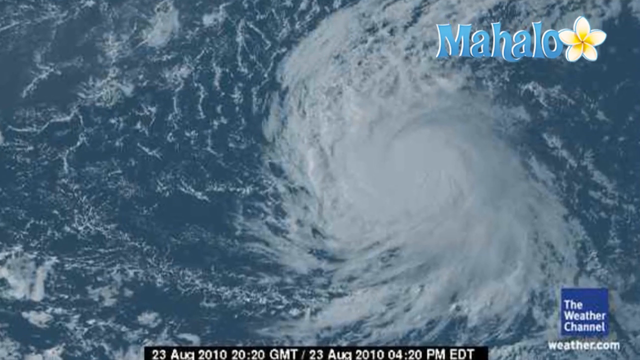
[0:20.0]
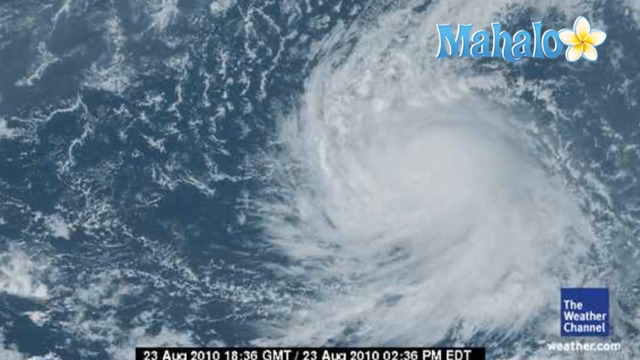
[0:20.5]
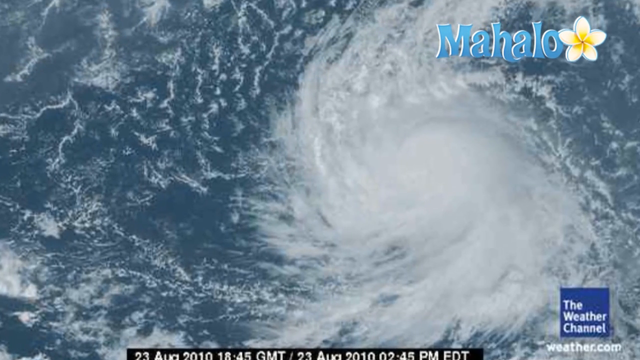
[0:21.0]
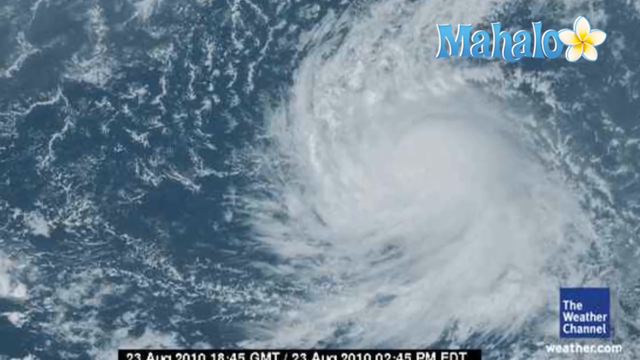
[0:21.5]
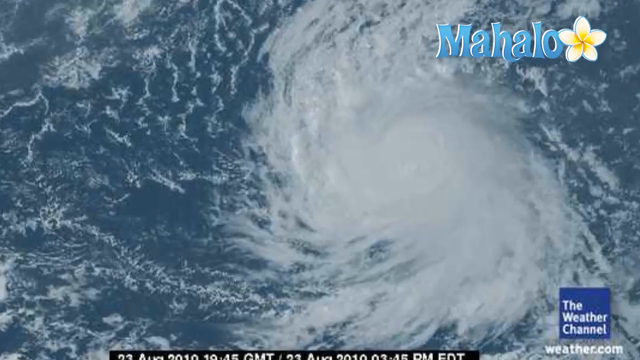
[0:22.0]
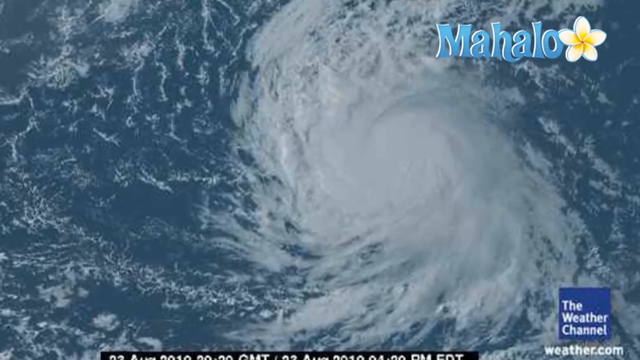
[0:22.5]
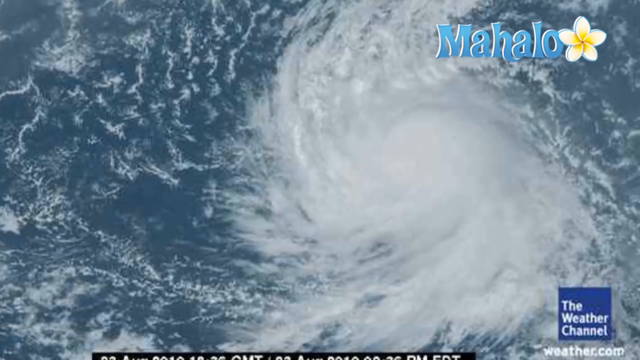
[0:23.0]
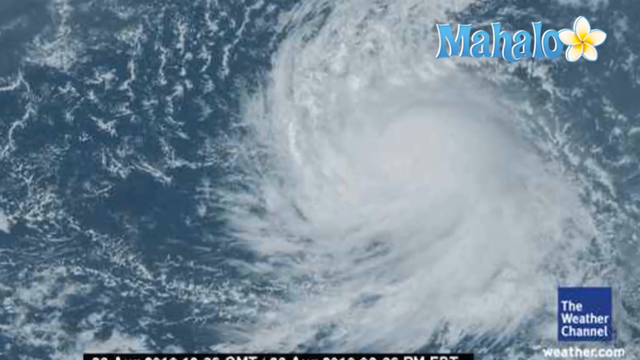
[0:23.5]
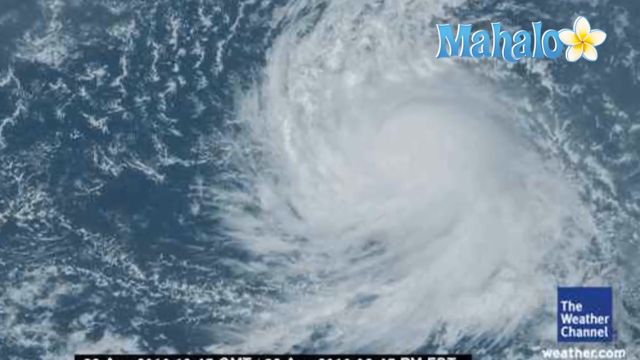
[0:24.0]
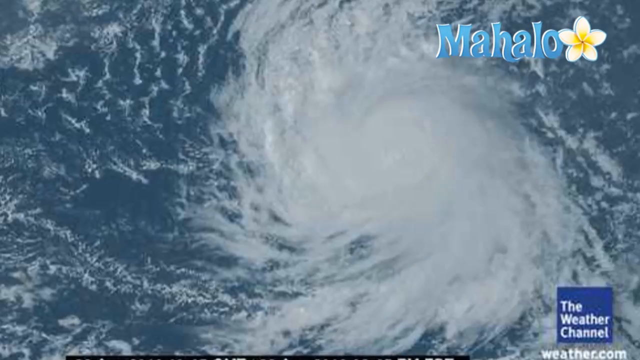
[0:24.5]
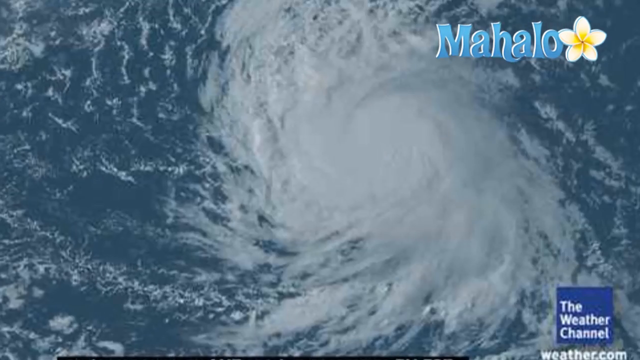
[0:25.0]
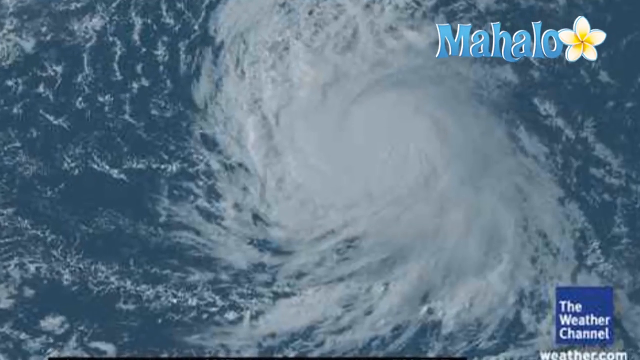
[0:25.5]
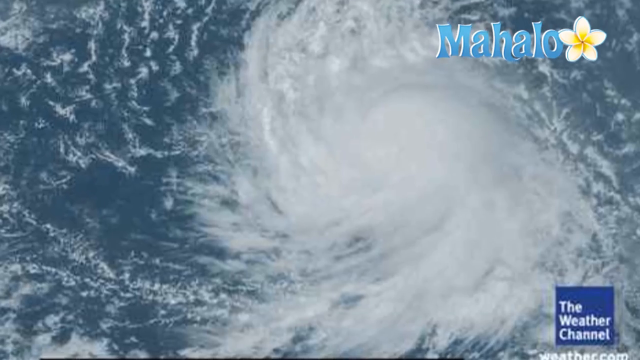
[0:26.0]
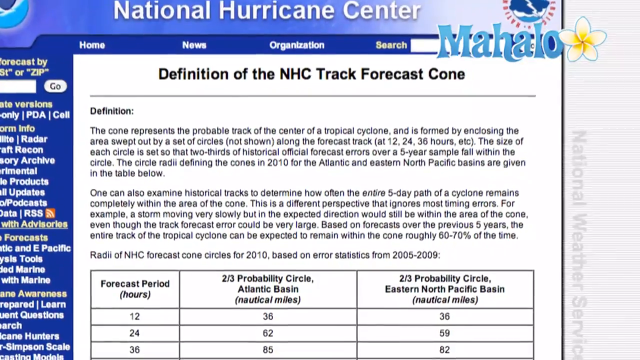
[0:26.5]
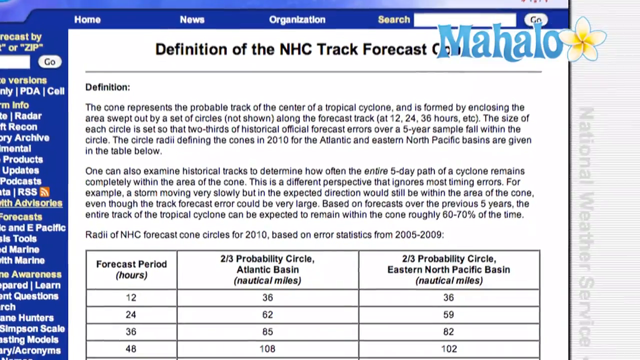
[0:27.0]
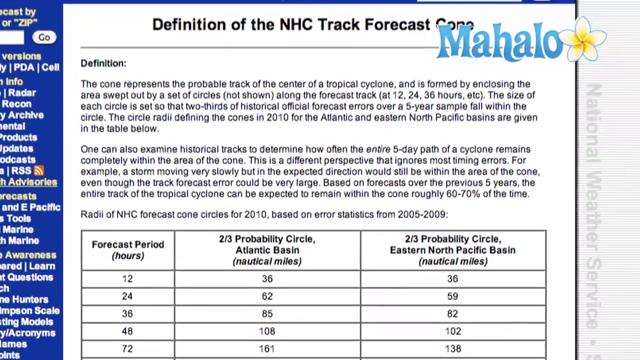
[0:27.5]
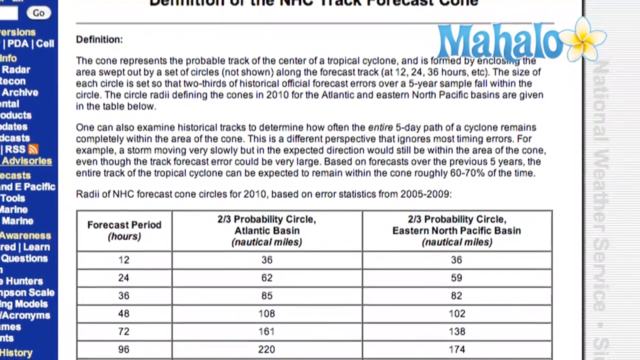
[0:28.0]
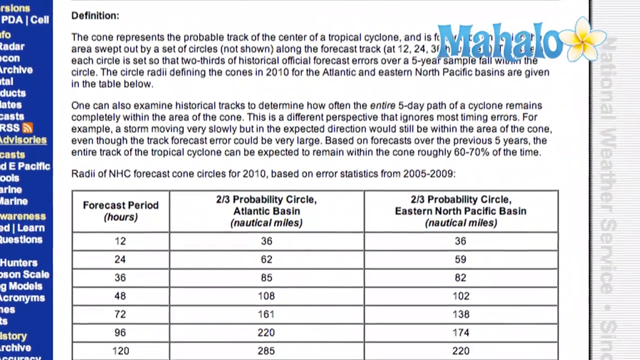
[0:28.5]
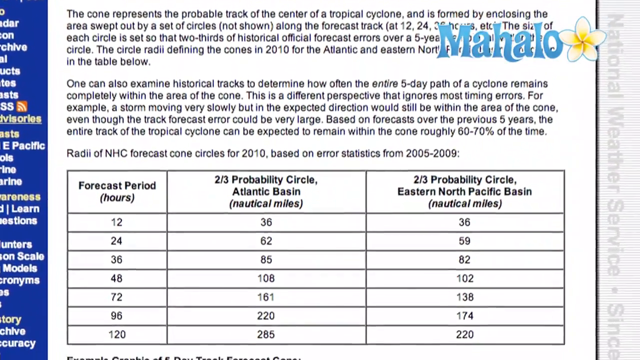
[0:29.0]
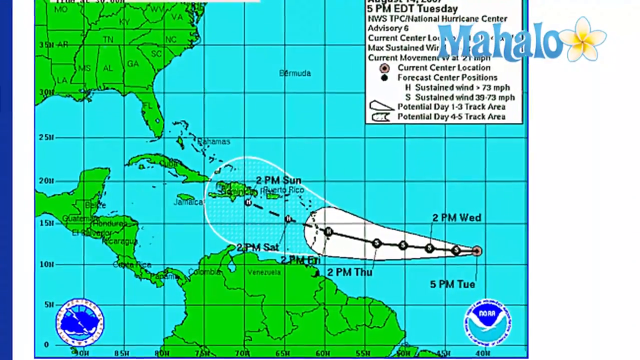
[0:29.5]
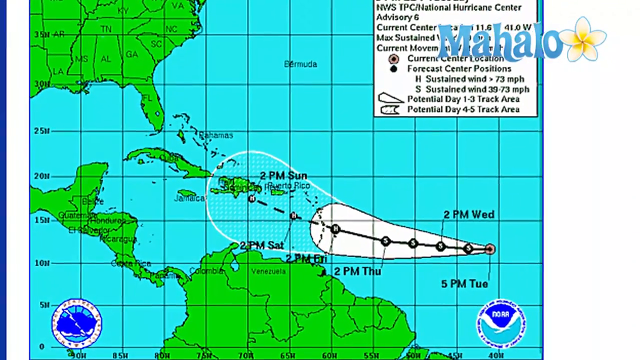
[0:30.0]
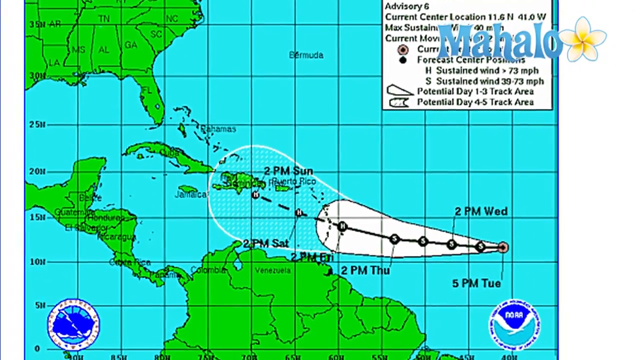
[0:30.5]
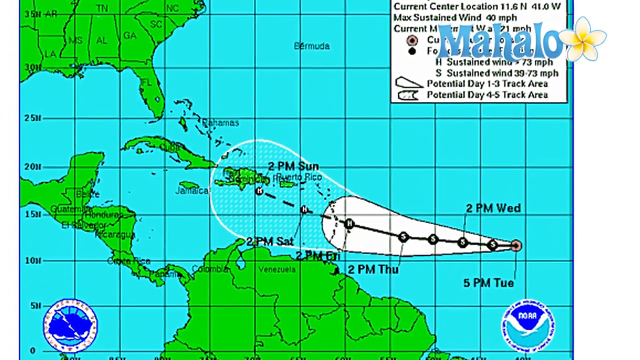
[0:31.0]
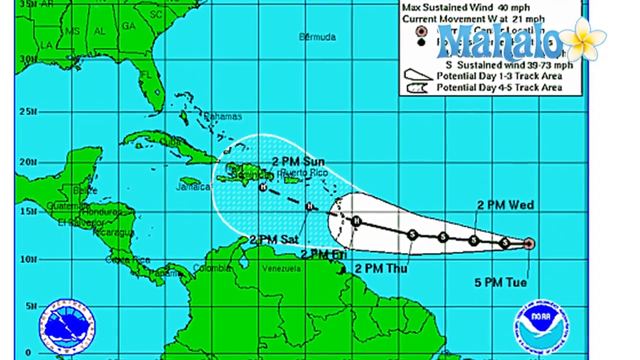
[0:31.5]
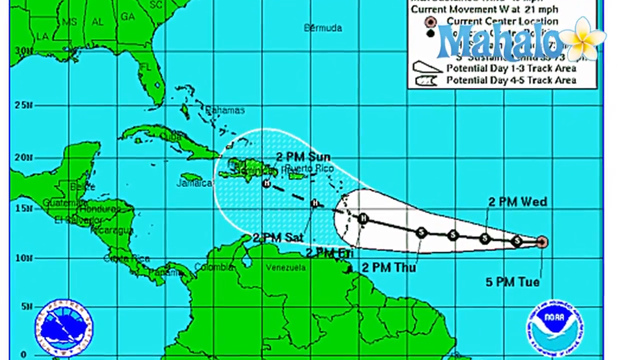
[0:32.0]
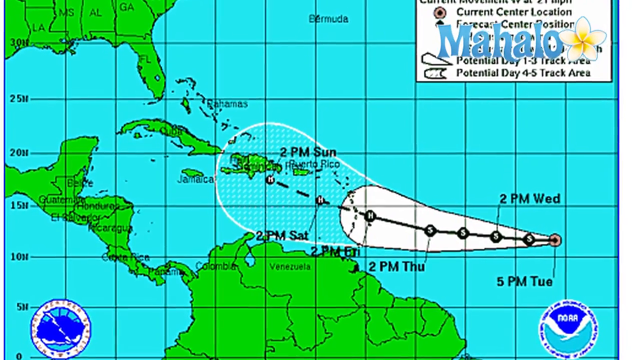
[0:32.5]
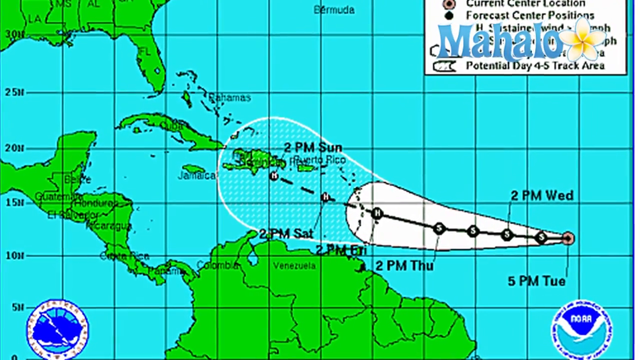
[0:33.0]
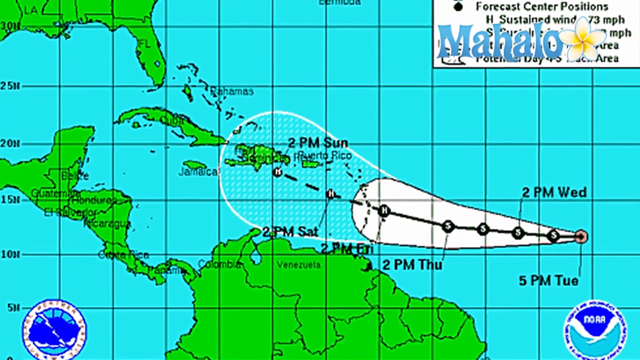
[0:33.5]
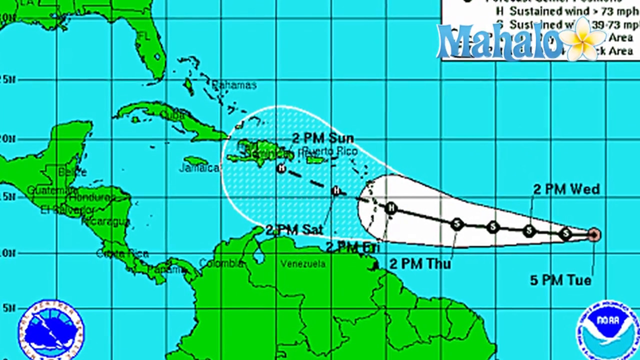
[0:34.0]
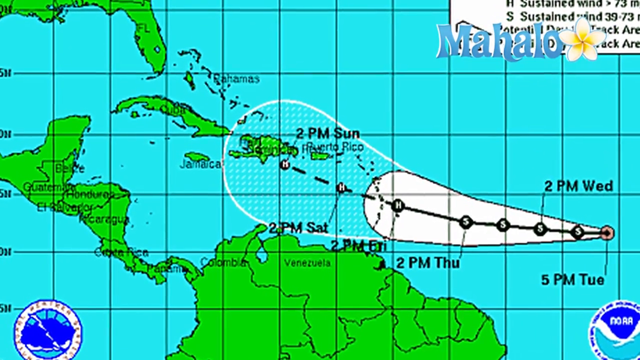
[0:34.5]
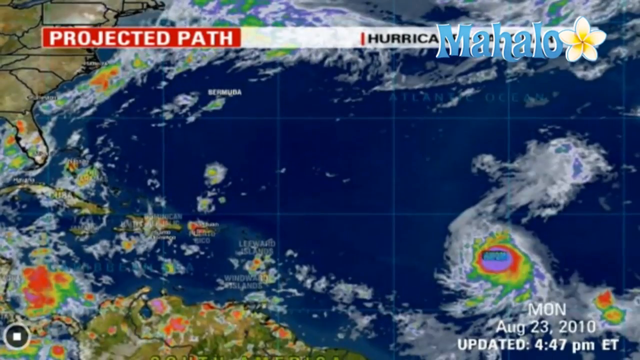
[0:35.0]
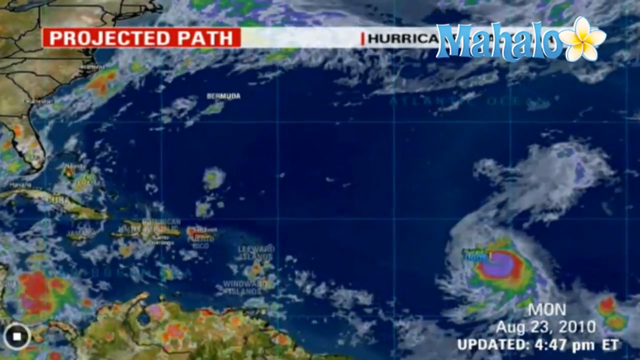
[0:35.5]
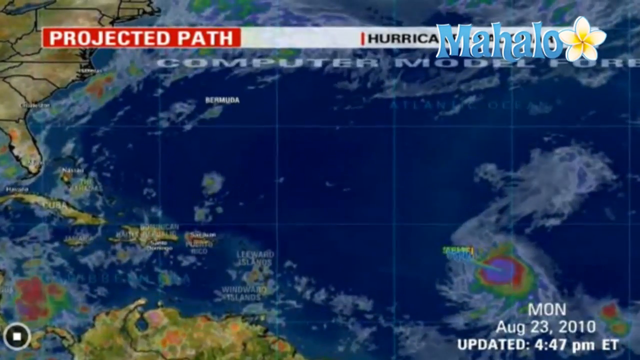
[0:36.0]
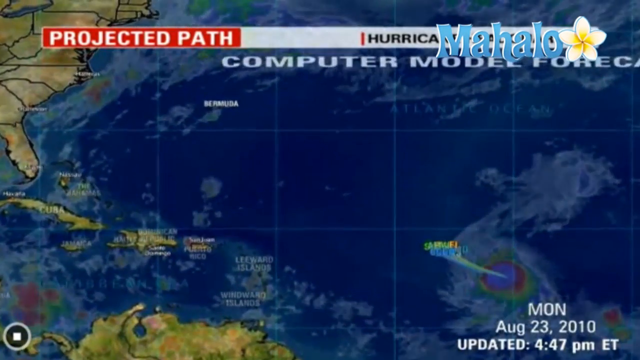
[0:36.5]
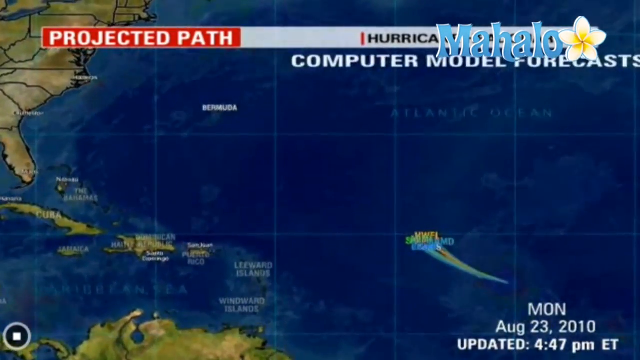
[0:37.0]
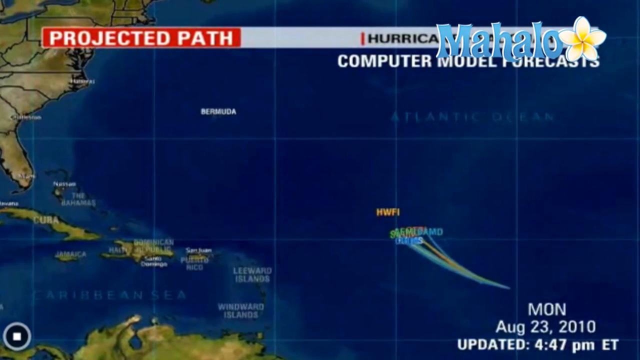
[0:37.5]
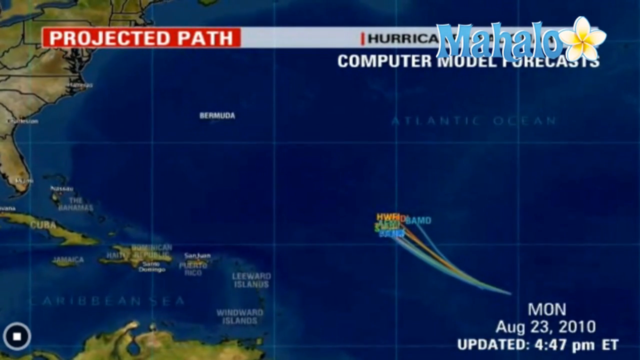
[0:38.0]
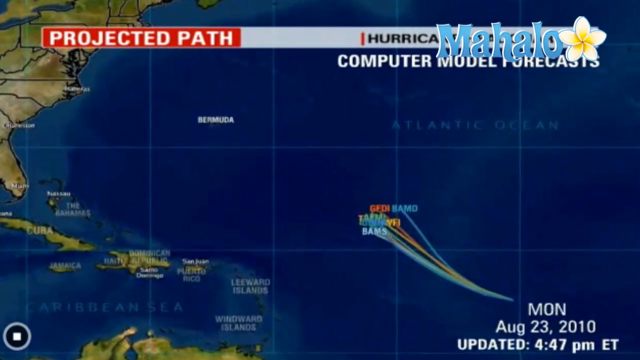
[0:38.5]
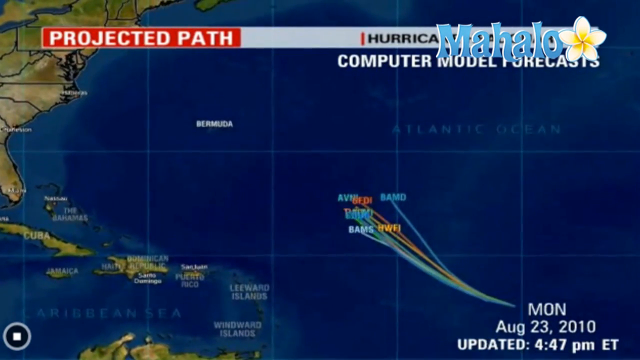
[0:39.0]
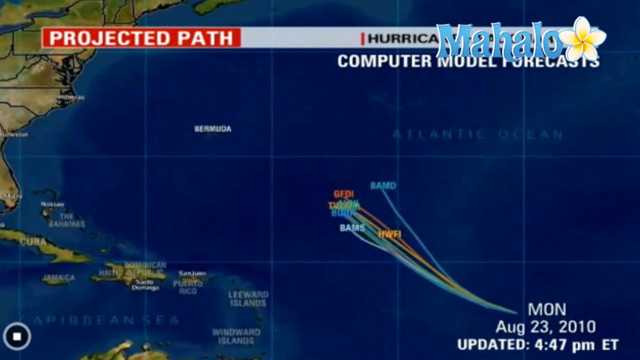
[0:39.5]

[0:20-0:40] A blue screen appears with a hurricane rushing in, followed by a definition of an "NHE track forecast cone", which represents the probable track of a tropical cyclone and is formed from a set of circles along the forecast track. A table lists the forecast period in hours alongside two-thirds probability circles for the Atlantic Basin and the Eastern Pacific Basin, with values such as 62 and 59 for the 12-hour and 24-hour forecast periods. A map shows Central America and the border of Venezuela. A hurricane radar shows a lot of waves.